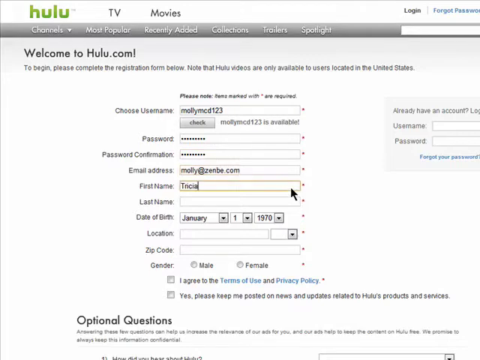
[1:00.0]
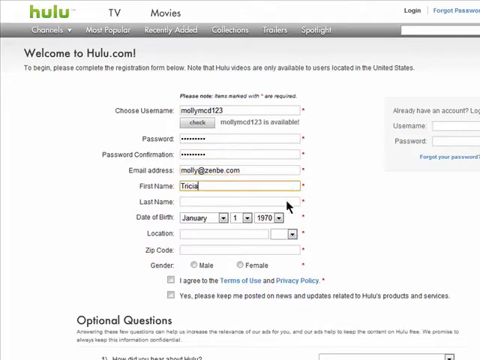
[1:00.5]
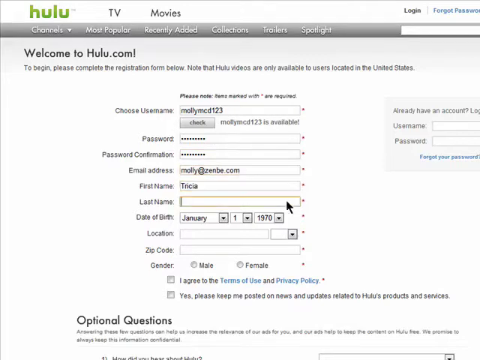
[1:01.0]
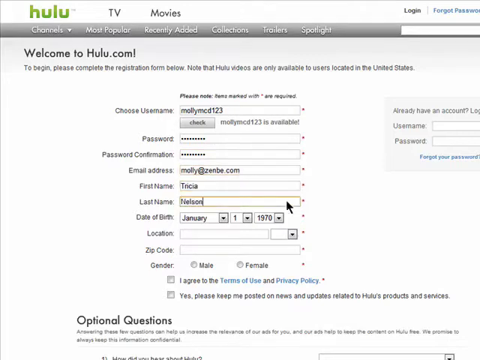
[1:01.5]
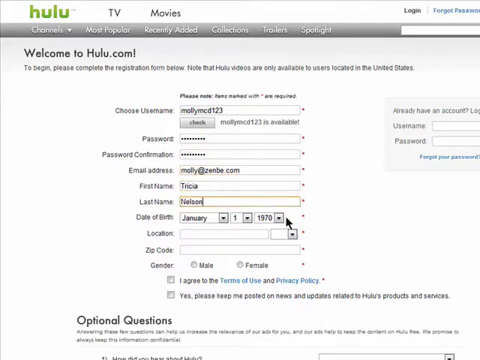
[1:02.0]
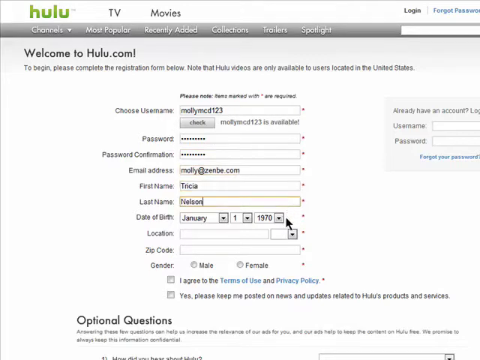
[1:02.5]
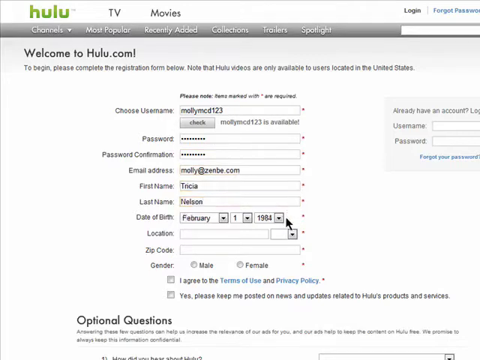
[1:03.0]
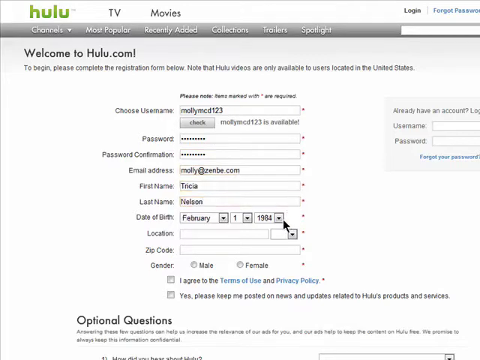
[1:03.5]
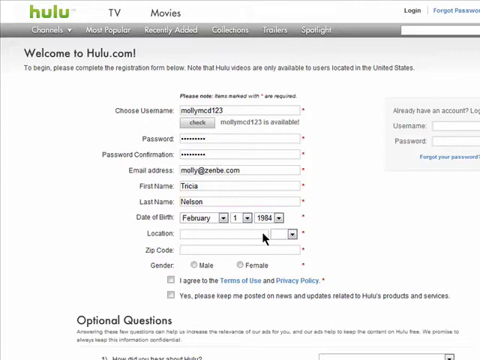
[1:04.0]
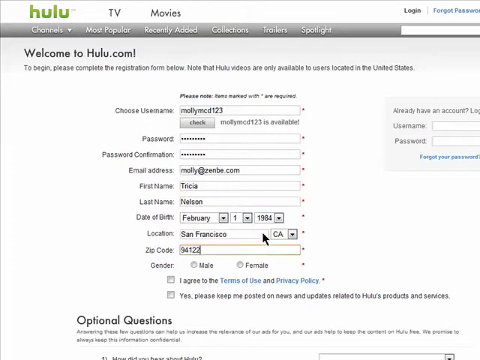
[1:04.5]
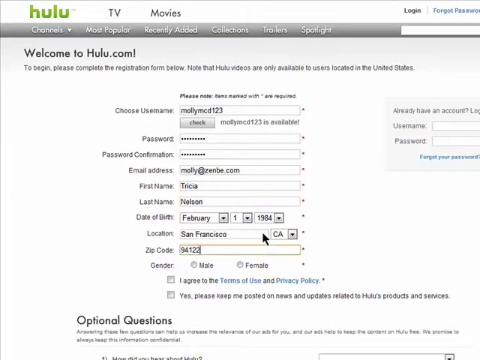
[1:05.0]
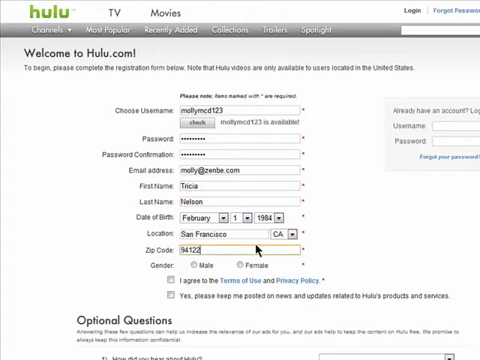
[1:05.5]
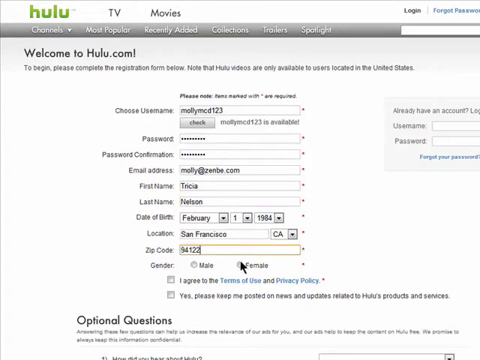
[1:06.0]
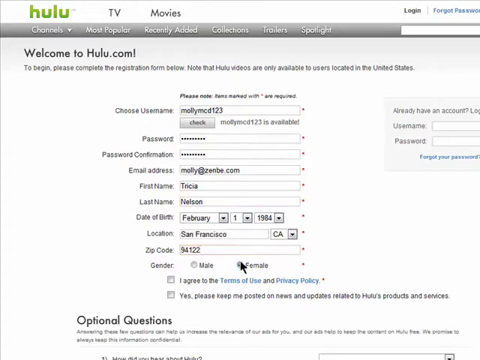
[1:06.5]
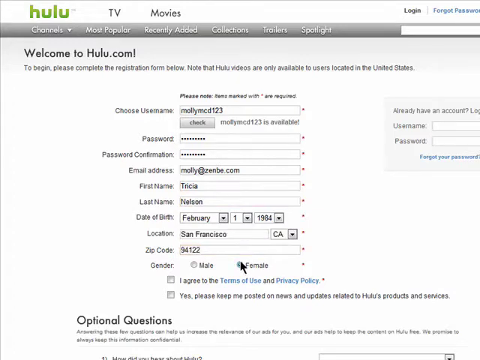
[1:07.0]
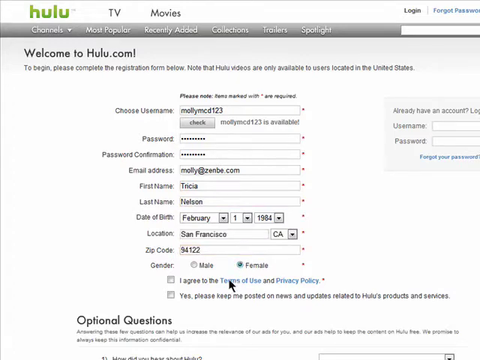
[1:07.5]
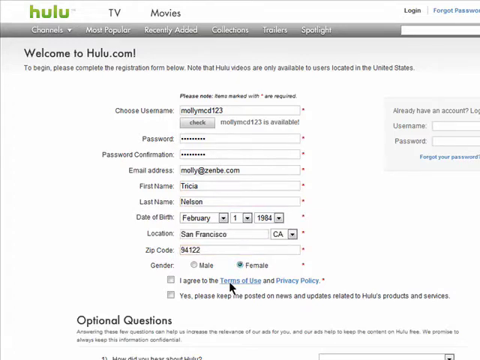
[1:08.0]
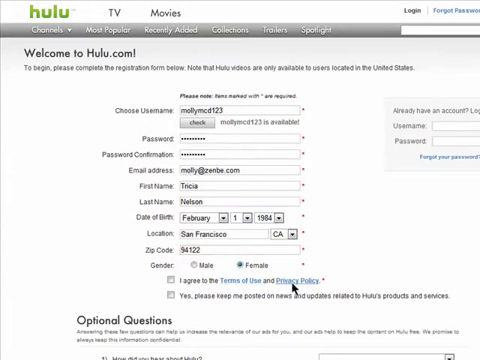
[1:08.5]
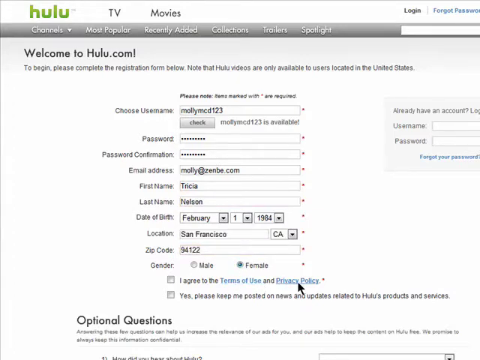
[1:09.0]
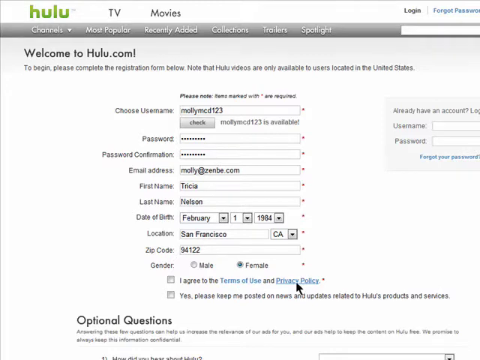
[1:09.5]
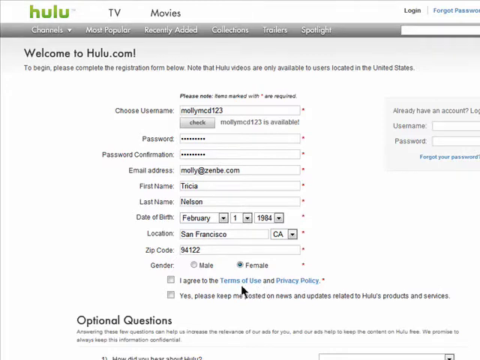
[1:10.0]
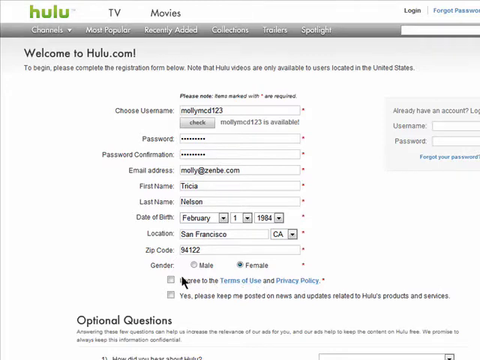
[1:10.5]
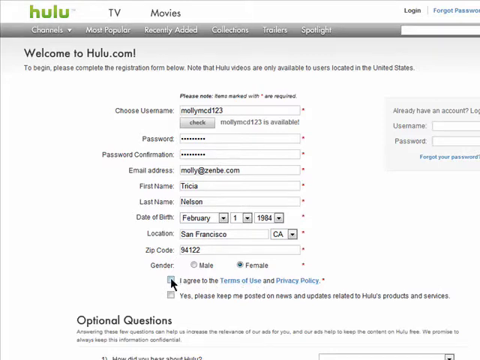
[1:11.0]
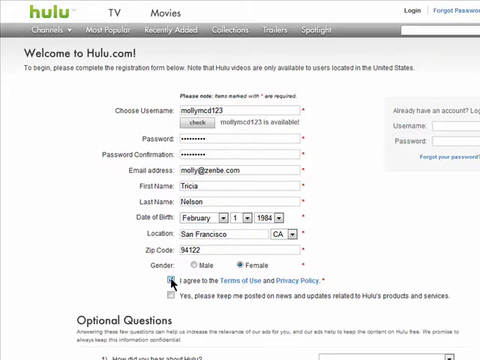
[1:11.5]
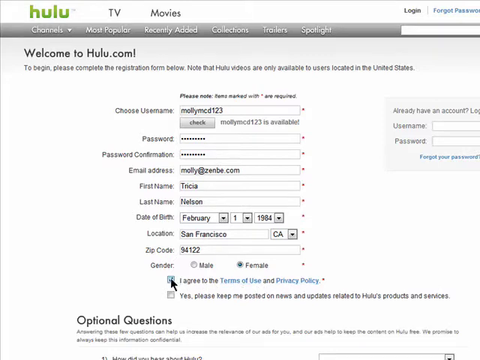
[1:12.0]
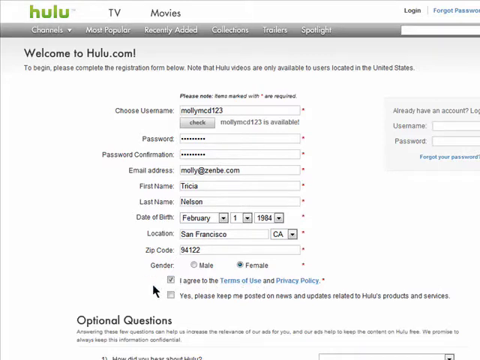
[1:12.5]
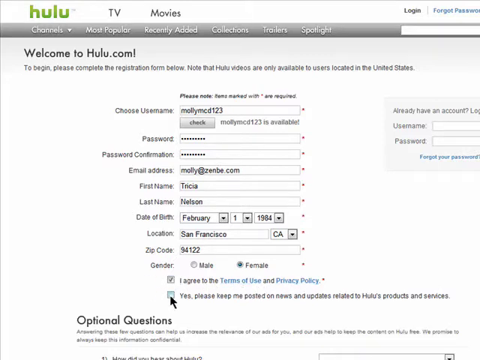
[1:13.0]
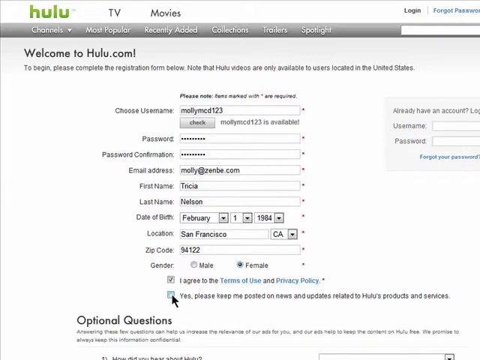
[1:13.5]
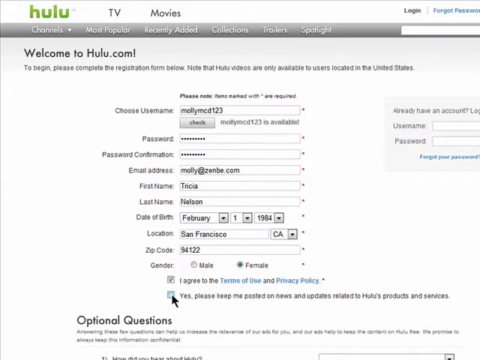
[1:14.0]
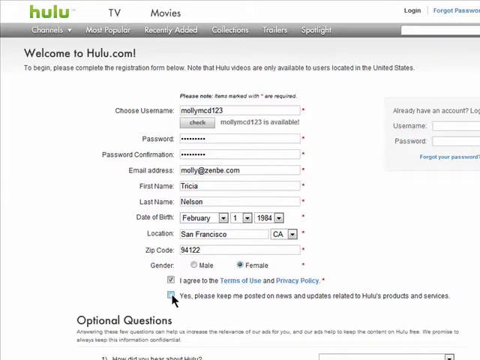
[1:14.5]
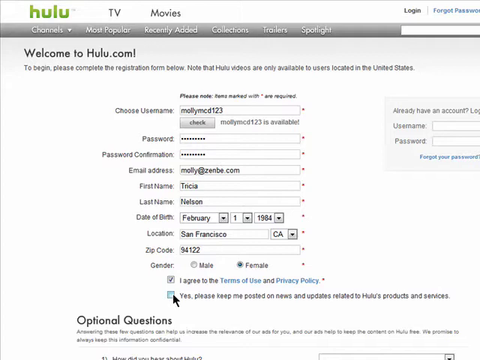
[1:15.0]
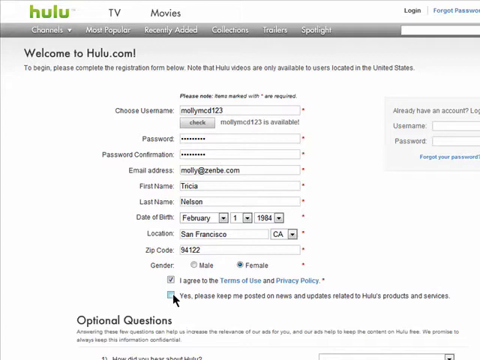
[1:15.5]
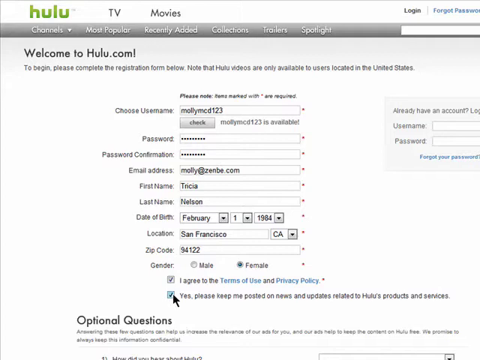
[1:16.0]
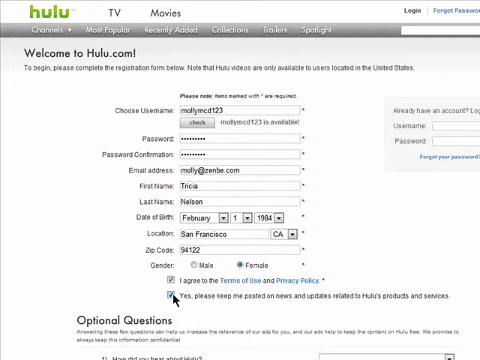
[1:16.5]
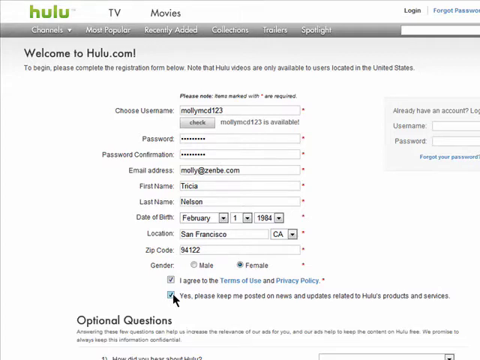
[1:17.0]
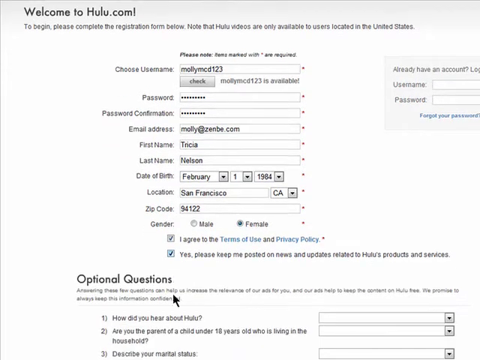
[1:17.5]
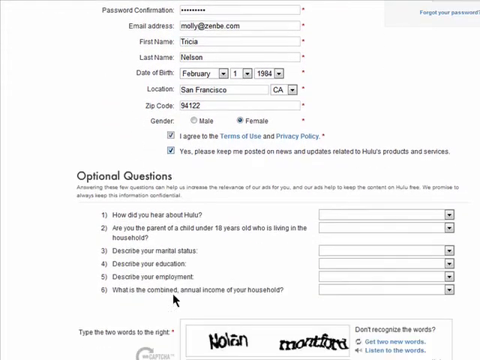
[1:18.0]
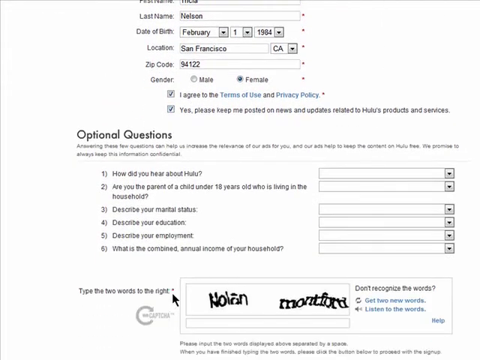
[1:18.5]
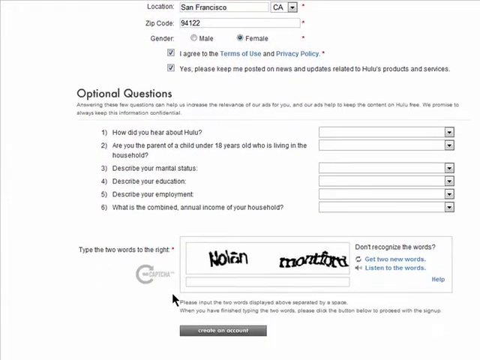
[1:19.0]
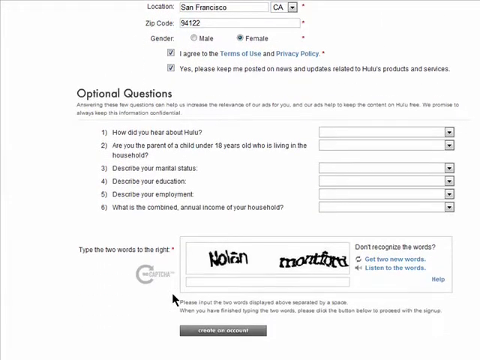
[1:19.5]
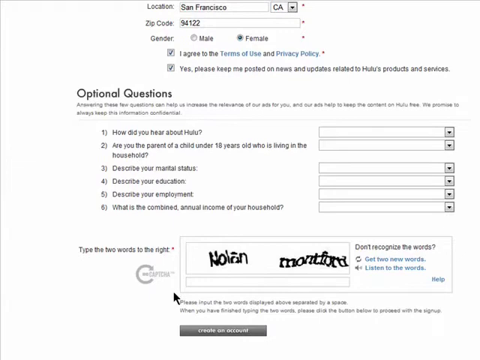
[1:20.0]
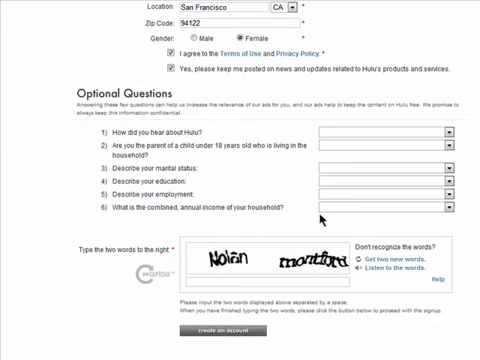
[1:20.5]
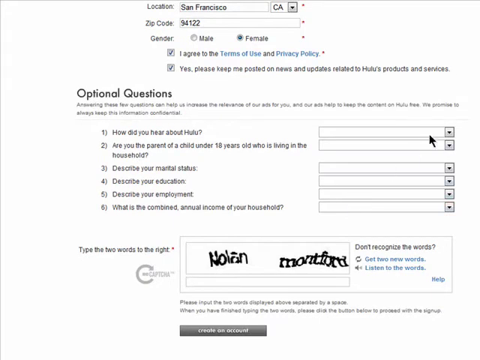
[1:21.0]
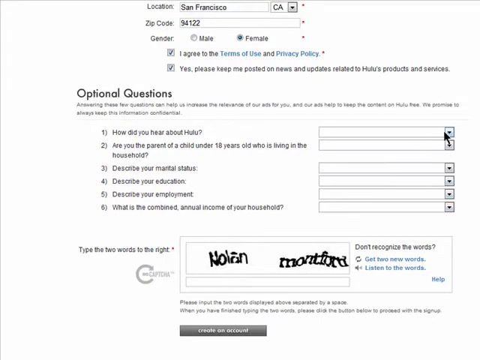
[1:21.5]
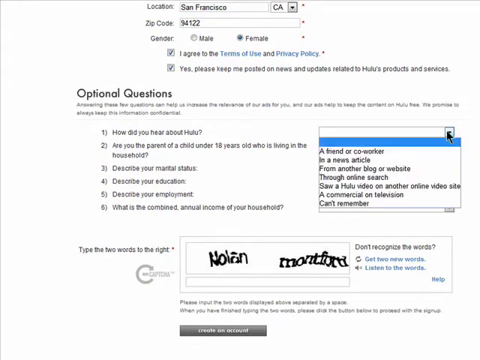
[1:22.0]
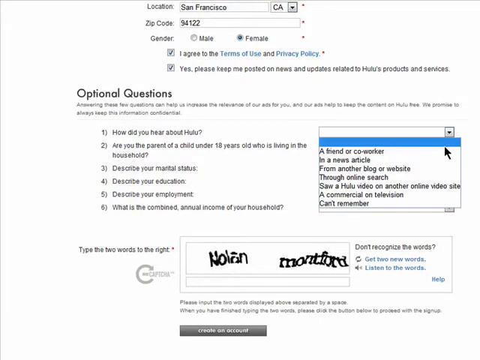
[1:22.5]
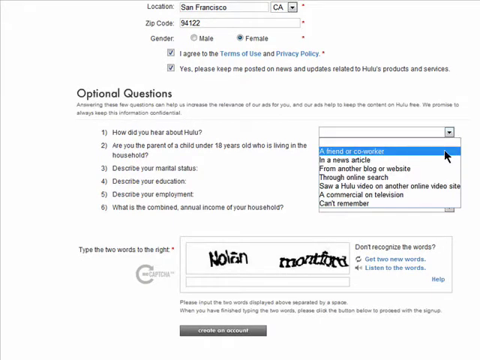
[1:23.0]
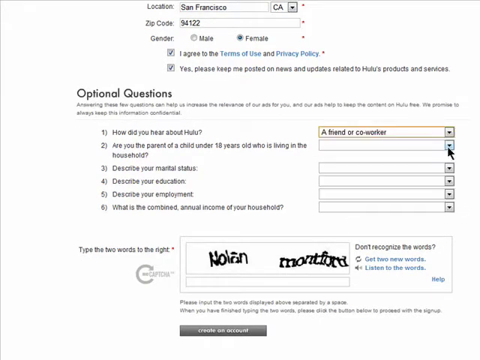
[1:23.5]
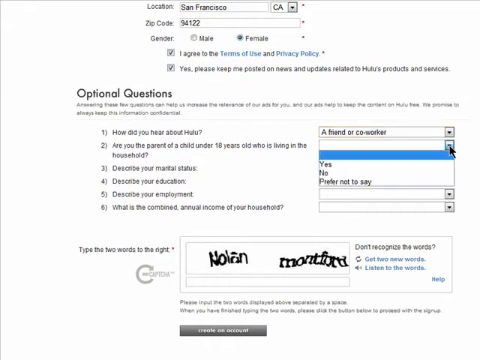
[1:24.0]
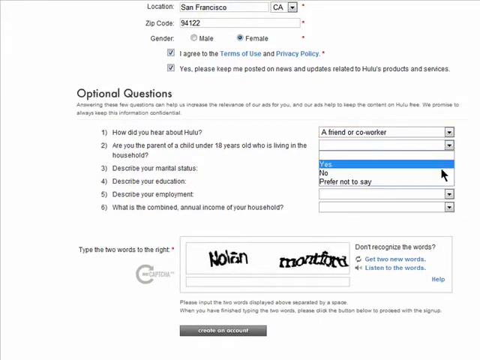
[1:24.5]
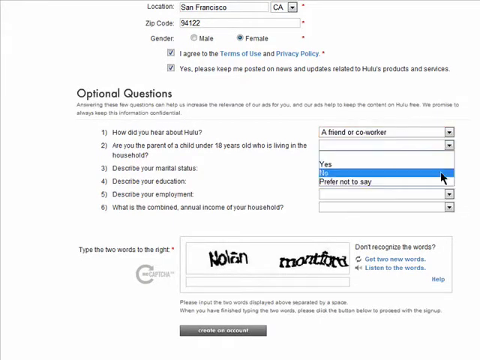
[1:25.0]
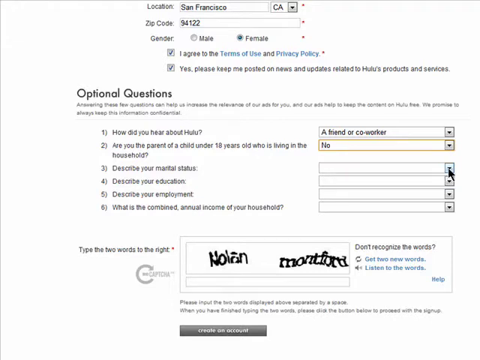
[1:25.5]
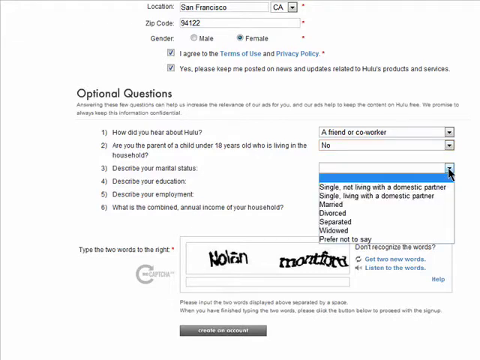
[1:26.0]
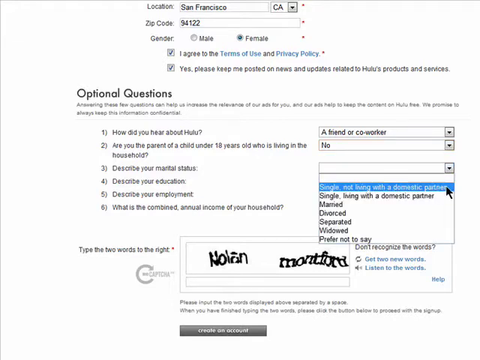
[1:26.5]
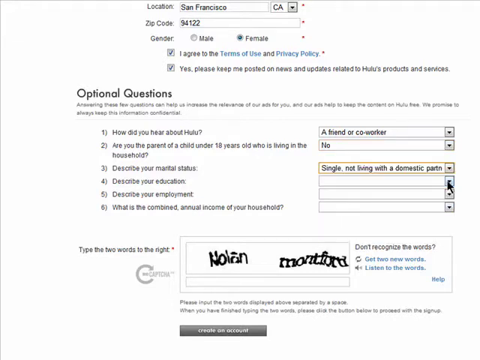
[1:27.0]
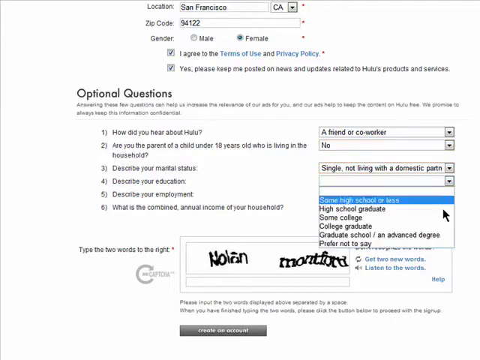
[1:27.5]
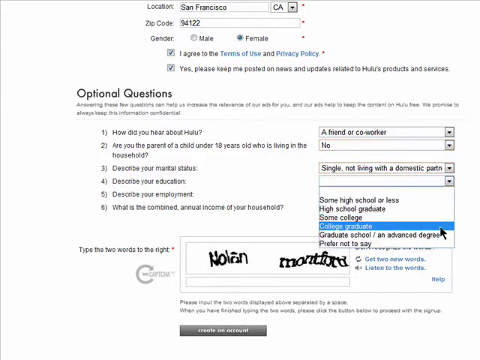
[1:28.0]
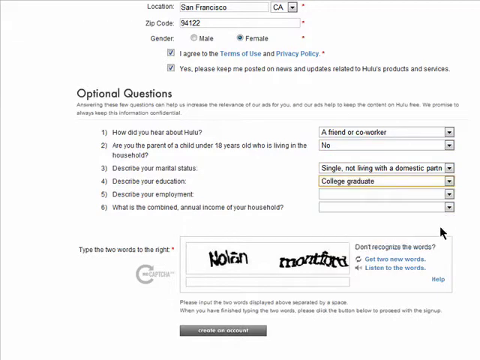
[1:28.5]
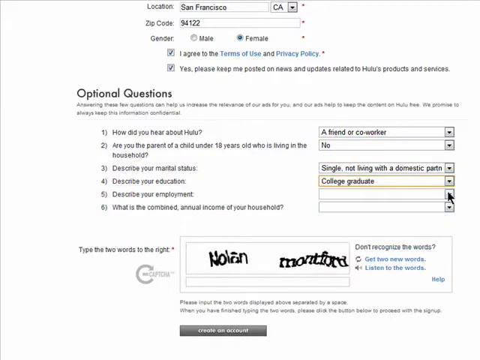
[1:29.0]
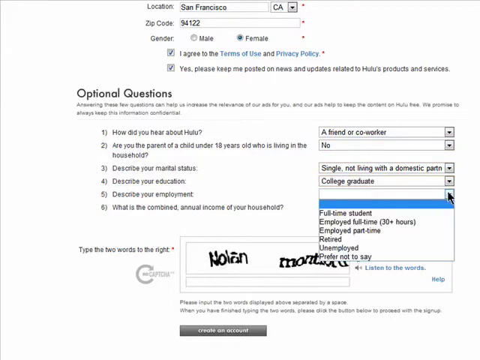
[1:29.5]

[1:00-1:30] On the Hulu sign-up form, the username mollymoot123 has been chosen, a password entered, and the password confirmation matches it. The email entered is molly@zenbear.com. The first name is Tricia and the last name Nelson. The date of birth is set to February 1, 1984. The location is San Francisco, with the state California, and the zip code is 94122. Female is selected as the gender. There are two tick boxes; one says "agree to the terms of use and privacy policy." The cursor points at the terms of use and privacy policy and then ticks that box, and then another box saying "yes, please keep me posted on news and updates related to Hulu products and services" is ticked. Scrolling down reveals optional questions such as "how did you hear about Hulu?", "are you the parent of a child under 18 who is living in a household?", "describe your marital status", education, employment, and "what is the combined annual income of your household." There is also "type two words to the right" with a reCAPTCHA. For the optional questions, the first is answered with a friend or co-worker, the second with no, the third with single, not living with a domestic partner, and the fourth with college graduation.